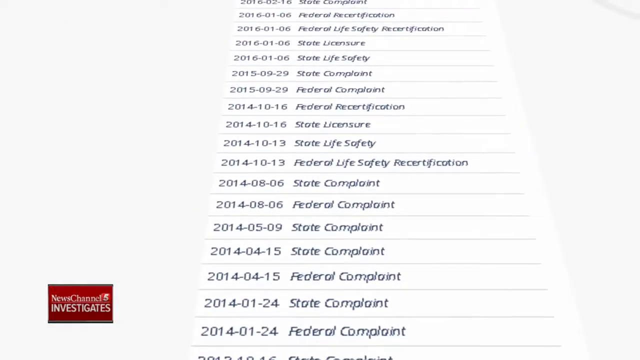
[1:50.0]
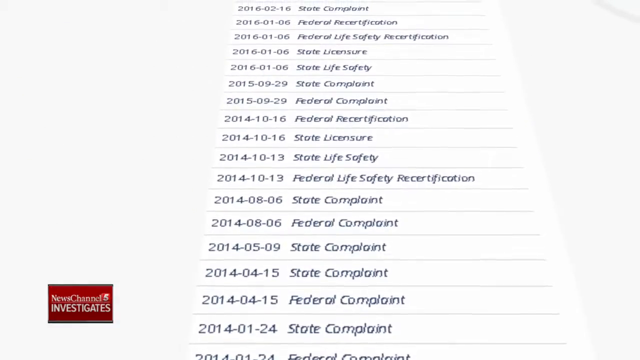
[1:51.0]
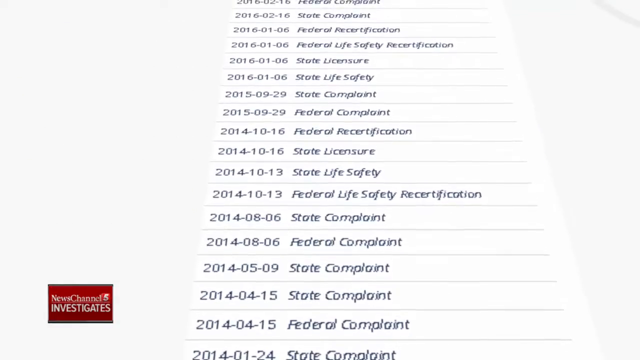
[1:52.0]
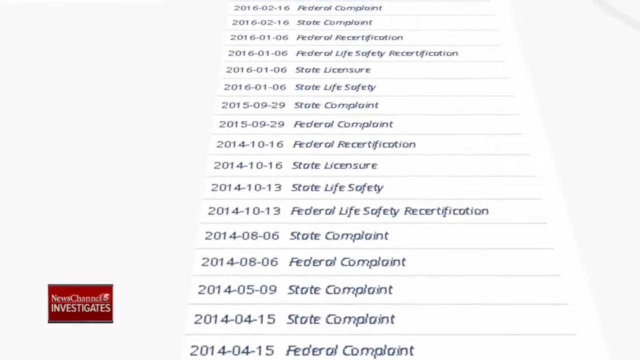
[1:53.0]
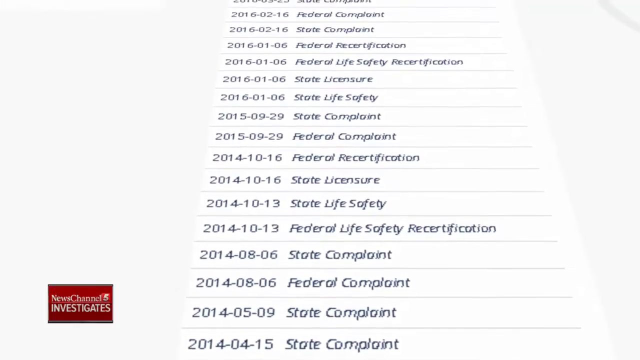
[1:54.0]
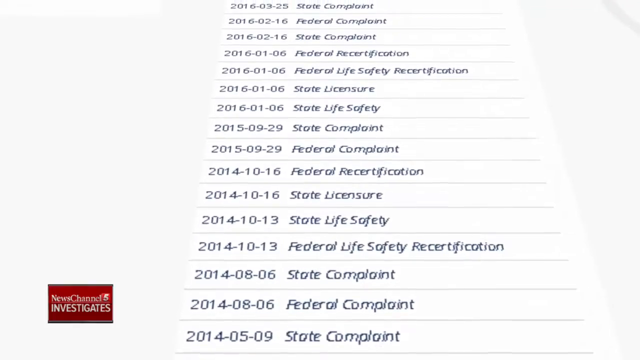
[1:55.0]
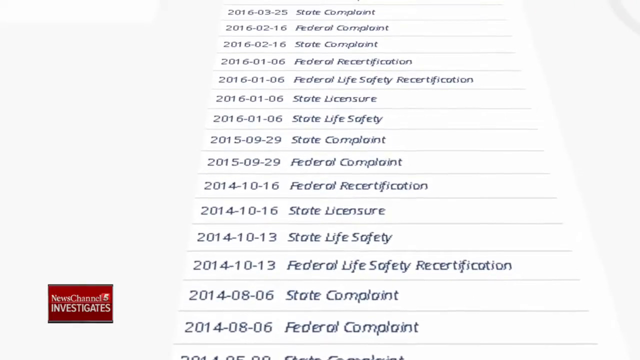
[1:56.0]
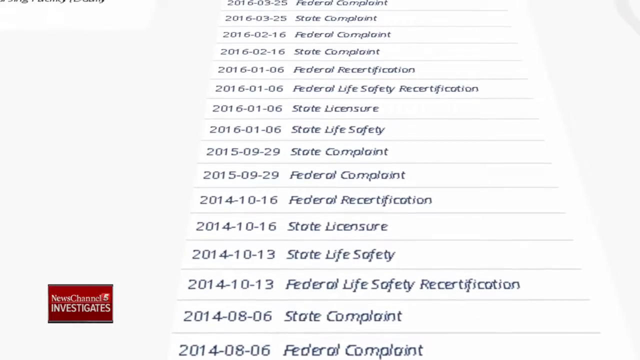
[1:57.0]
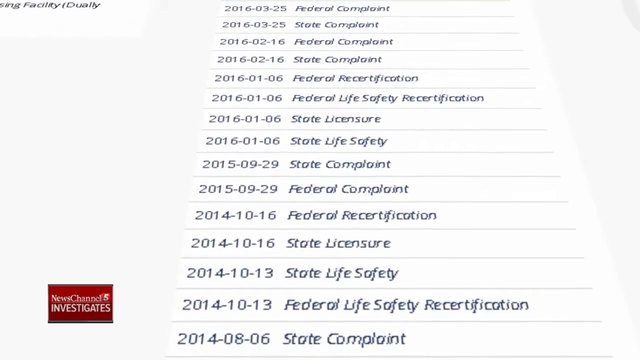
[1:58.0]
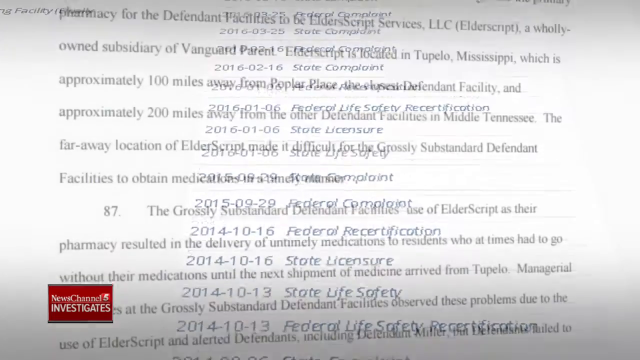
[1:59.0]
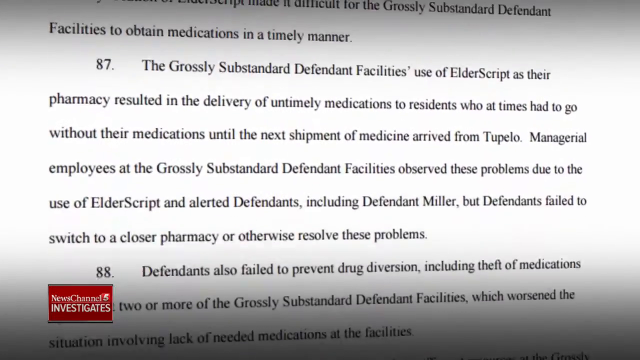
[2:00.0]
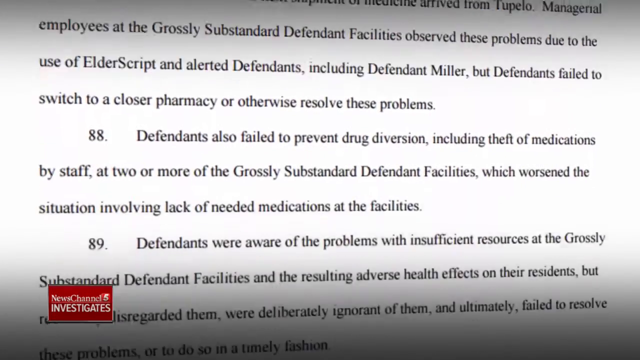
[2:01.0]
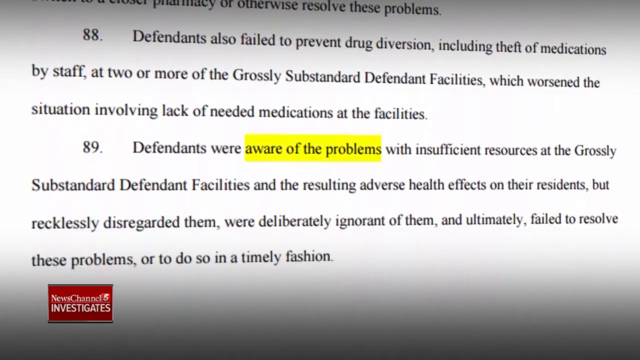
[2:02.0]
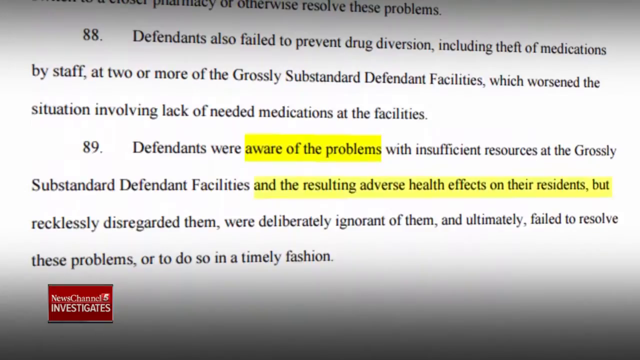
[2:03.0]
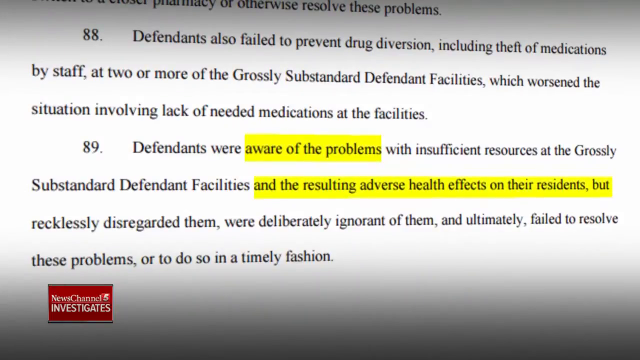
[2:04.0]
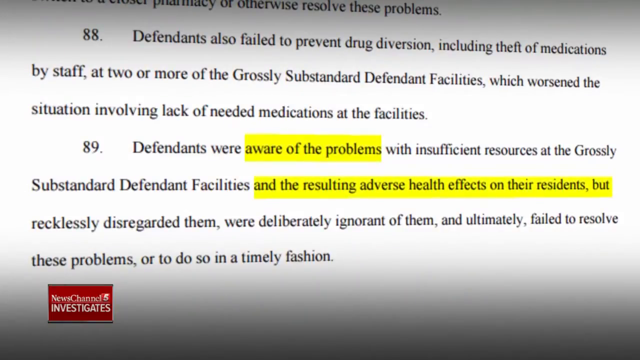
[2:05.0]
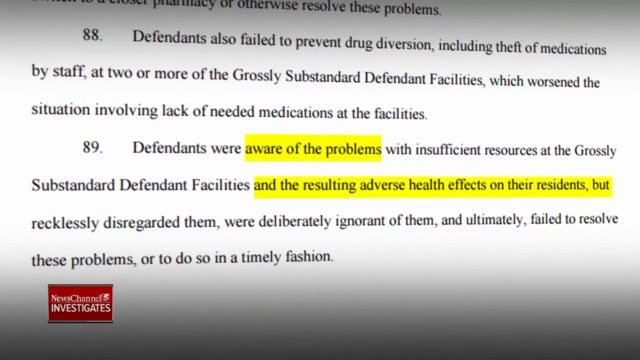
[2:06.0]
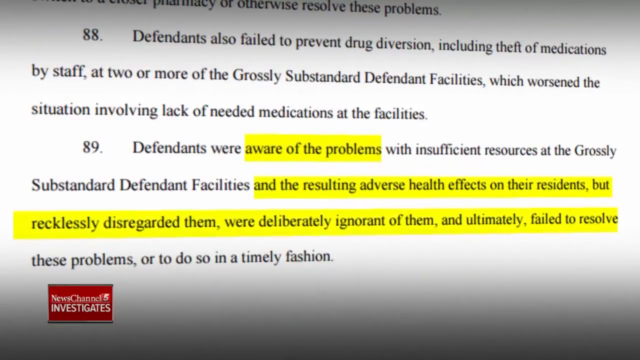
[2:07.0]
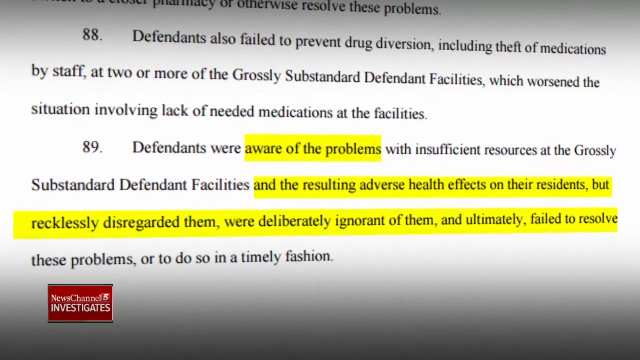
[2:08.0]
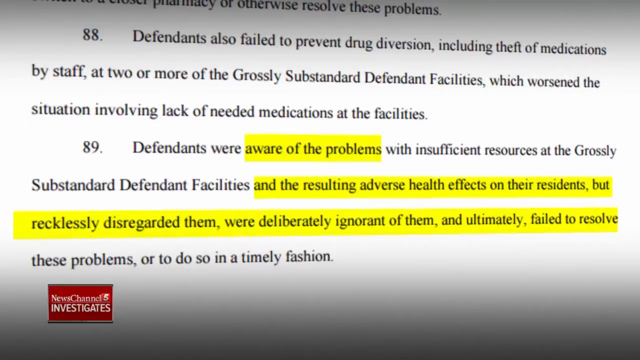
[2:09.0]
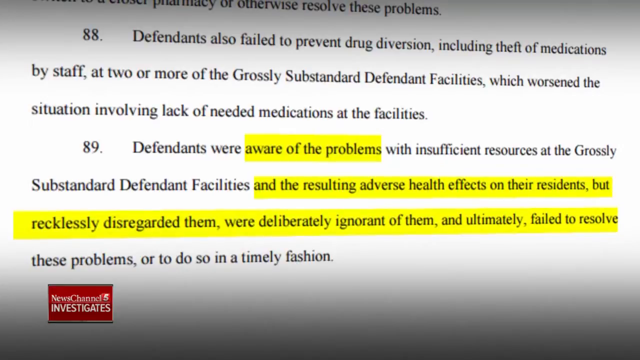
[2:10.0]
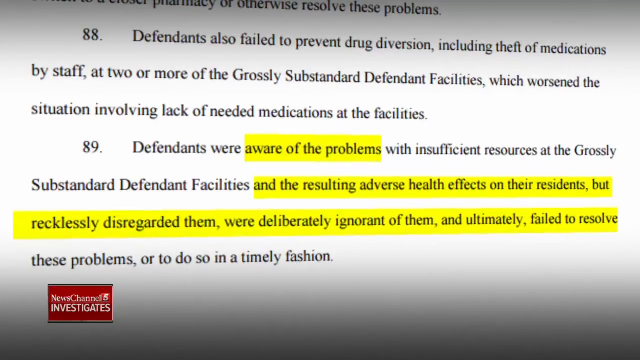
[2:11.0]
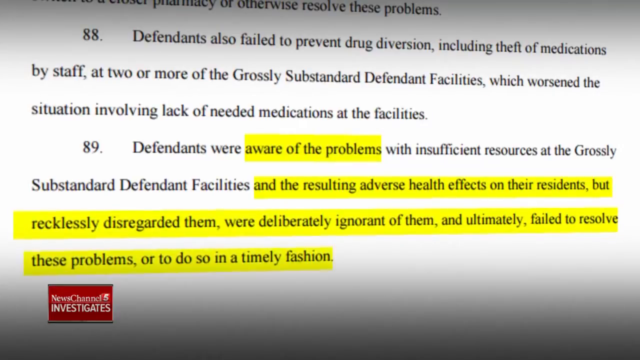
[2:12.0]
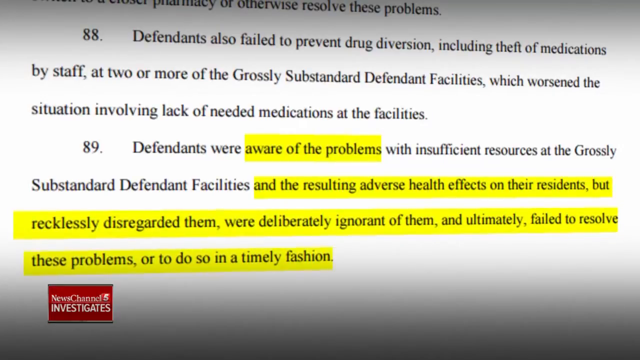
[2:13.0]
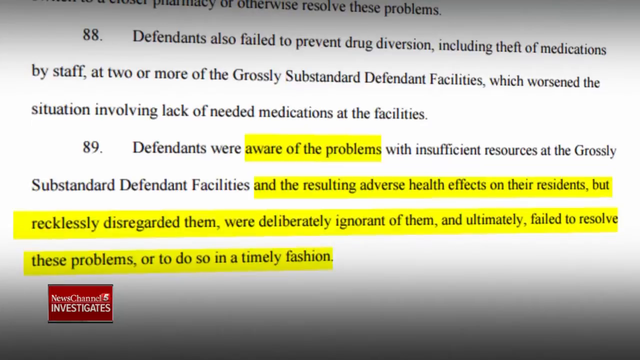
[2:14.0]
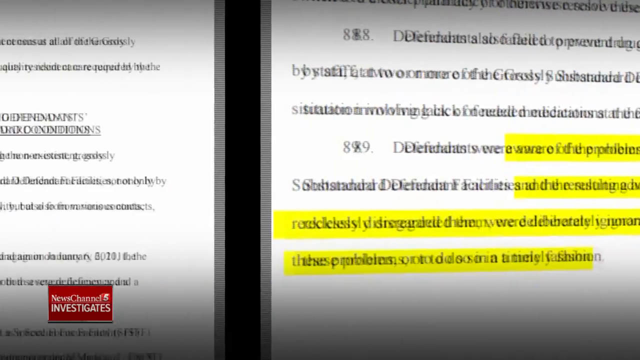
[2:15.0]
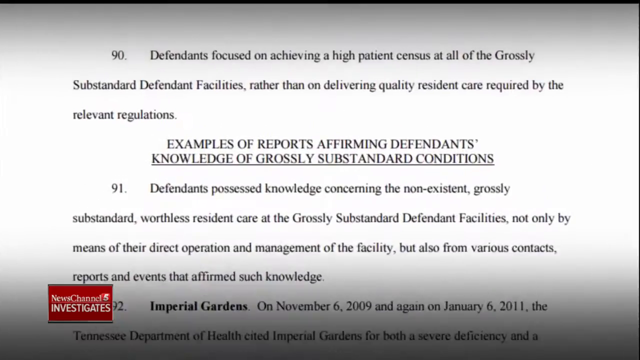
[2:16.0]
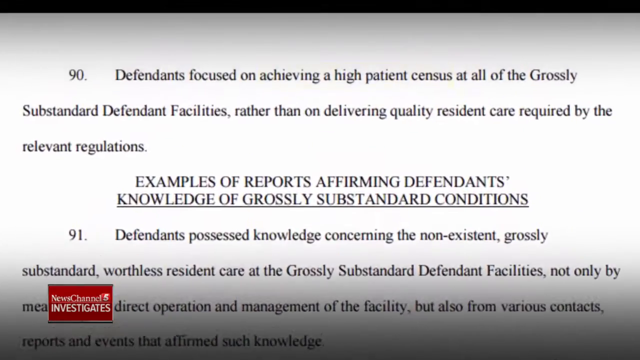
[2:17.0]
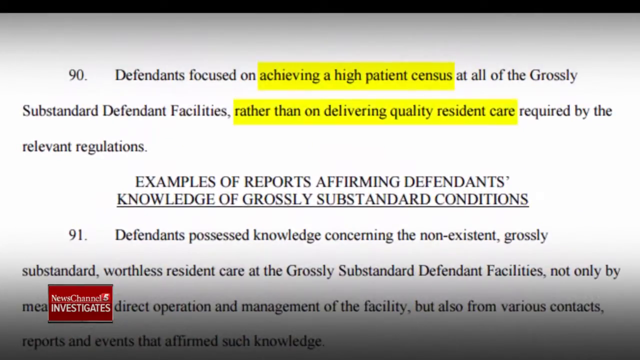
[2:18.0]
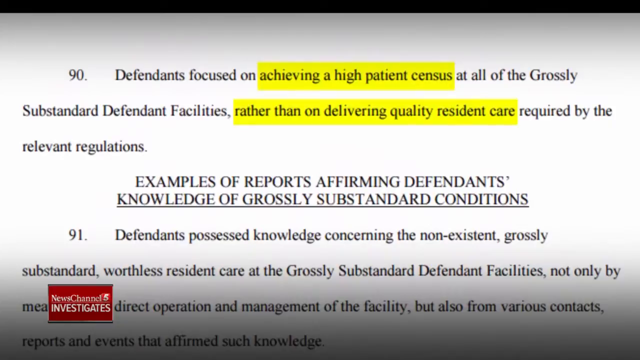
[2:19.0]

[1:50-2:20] A long list of complaints appears, most of them from the state and the federal government, with some possibly from an insurance company. The state has made many complaints against the facilities, and the federal government apparently dozens and dozens, going back years to the mid-2010s. Further court documents state that the defendants were aware of the problems with insufficient resources at the grossly substandard defendant facilities and the resulting adverse health effects on residents, but recklessly disregarded them, were deliberately ignorant of them, and ultimately failed to resolve these problems or to do so in a timely fashion. The documents also state that the defendants focused on achieving a high patient census at all the grossly substandard defendant facilities rather than on delivering the quality resident care required by the relevant regulations. Below is a list of examples.